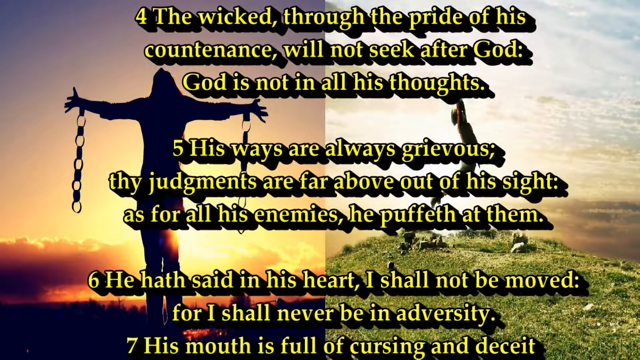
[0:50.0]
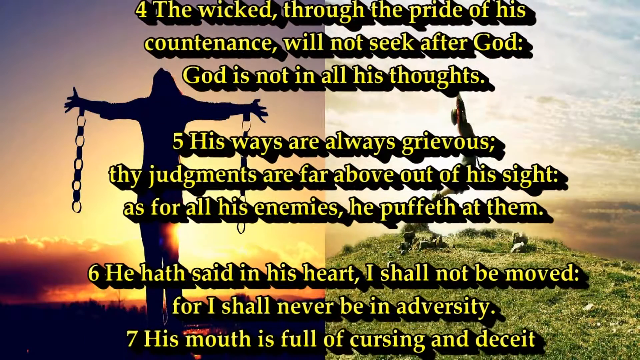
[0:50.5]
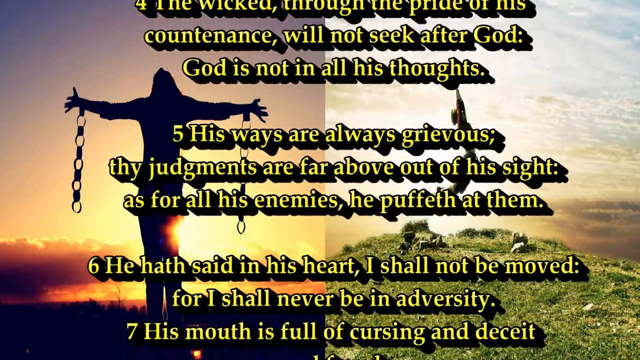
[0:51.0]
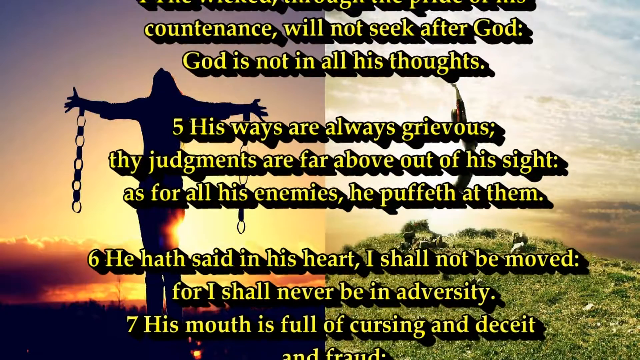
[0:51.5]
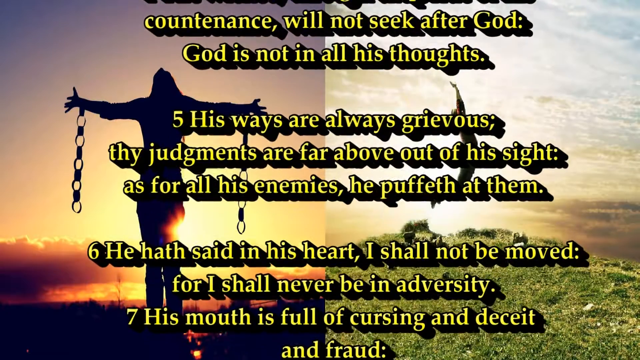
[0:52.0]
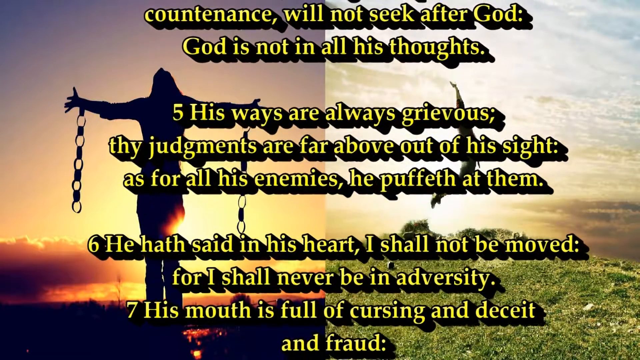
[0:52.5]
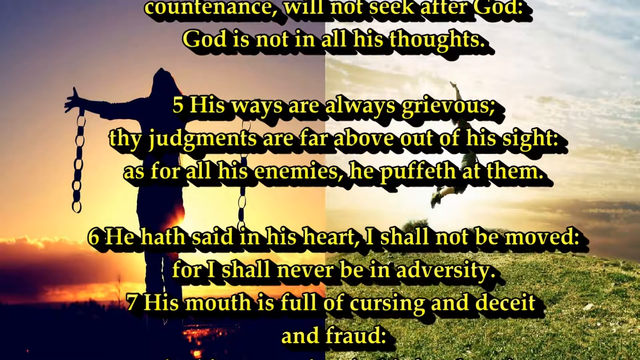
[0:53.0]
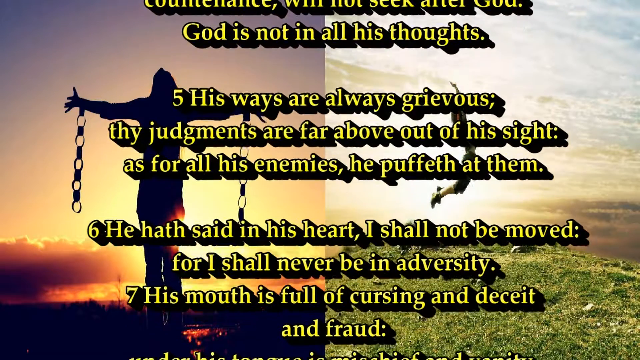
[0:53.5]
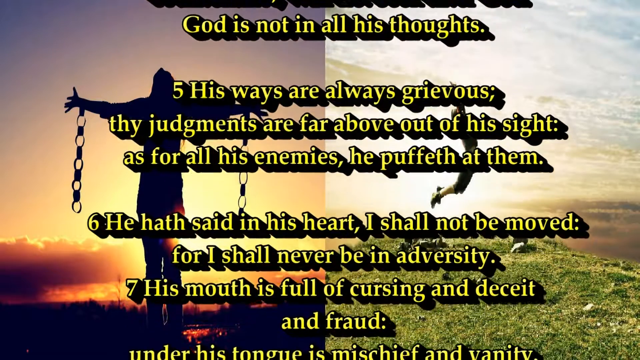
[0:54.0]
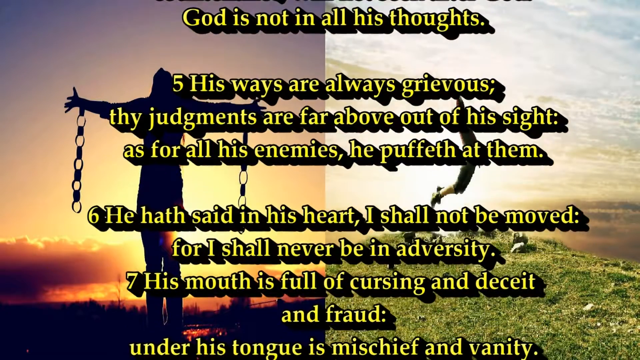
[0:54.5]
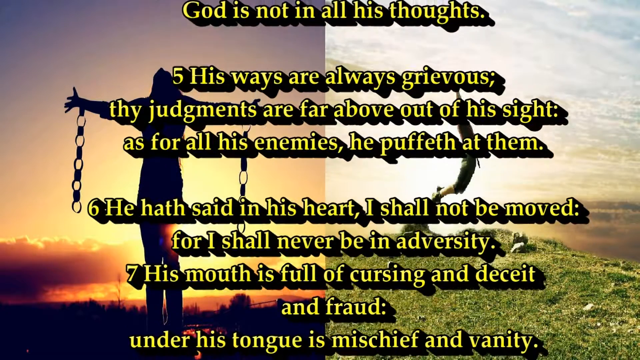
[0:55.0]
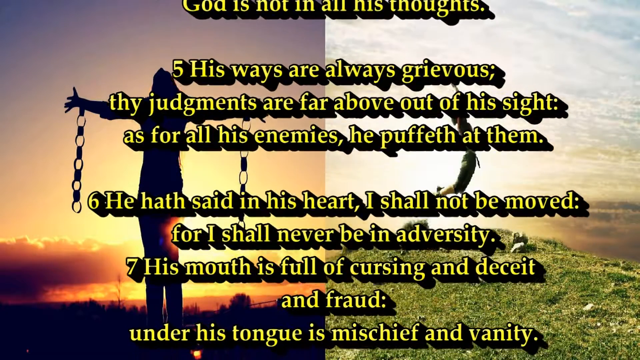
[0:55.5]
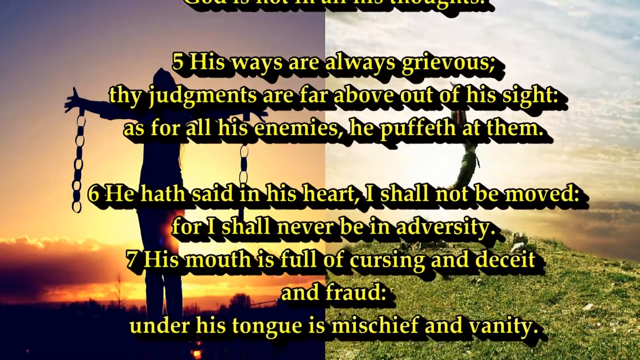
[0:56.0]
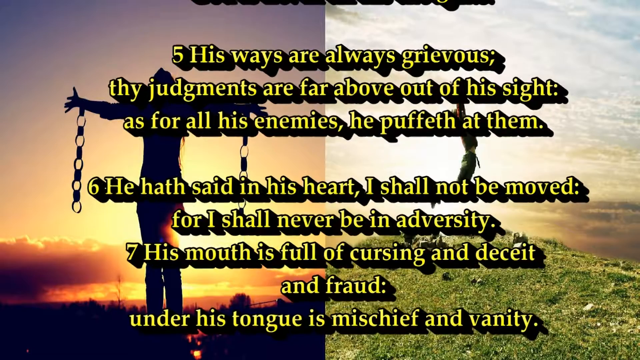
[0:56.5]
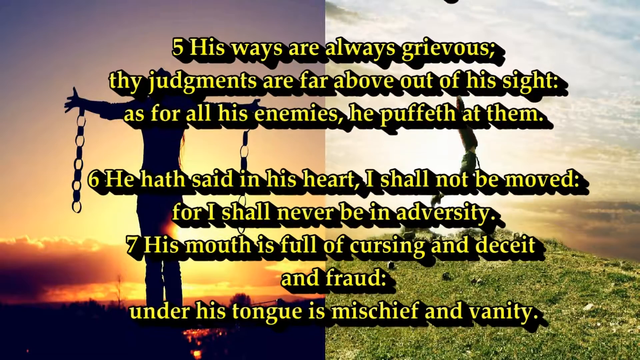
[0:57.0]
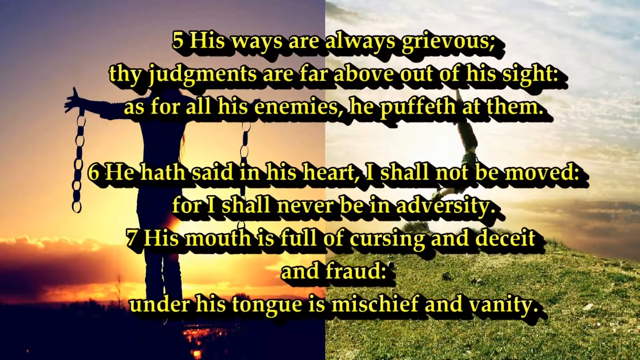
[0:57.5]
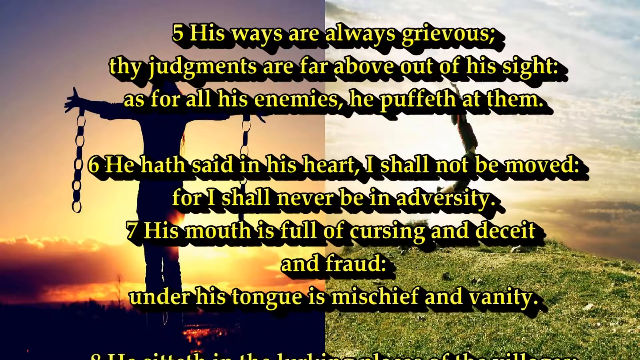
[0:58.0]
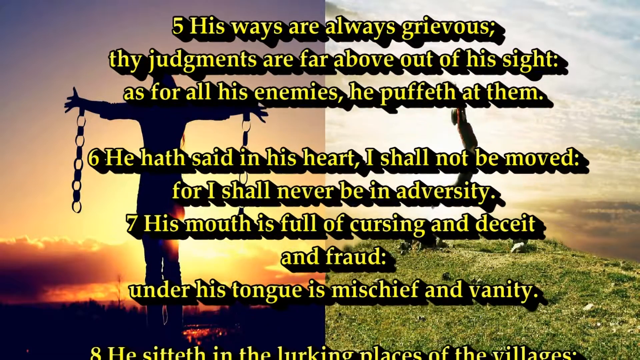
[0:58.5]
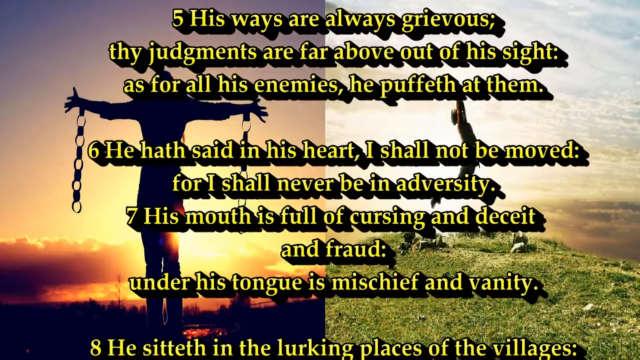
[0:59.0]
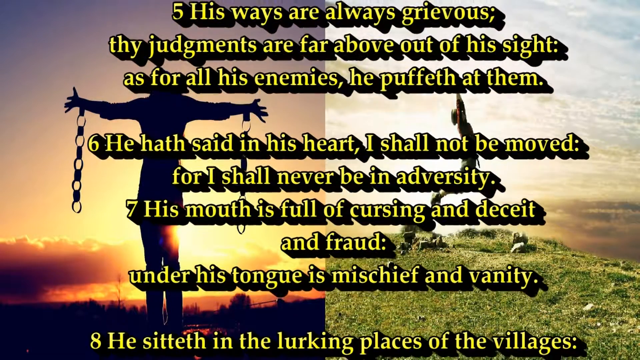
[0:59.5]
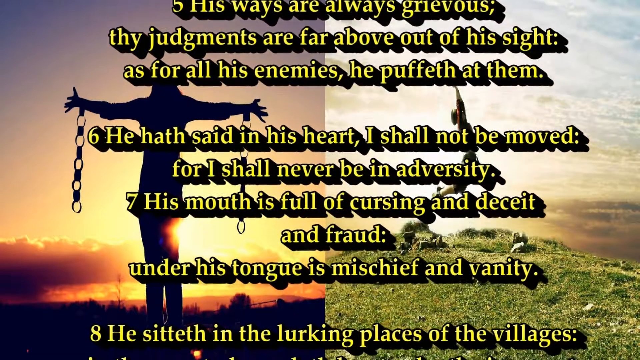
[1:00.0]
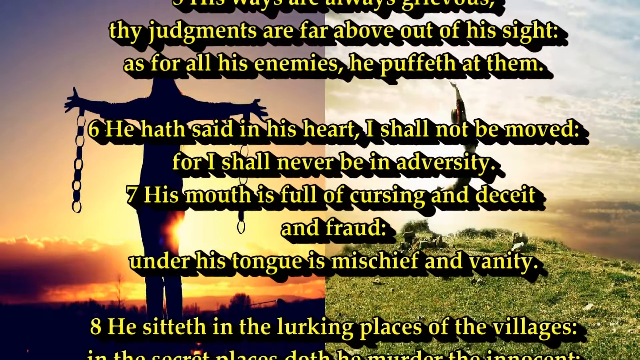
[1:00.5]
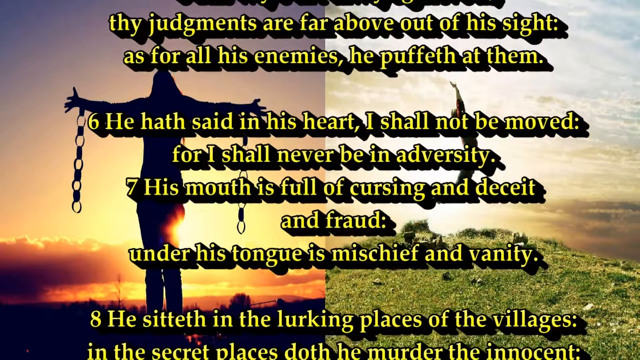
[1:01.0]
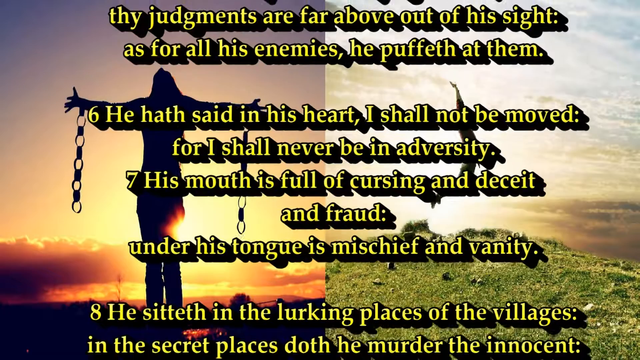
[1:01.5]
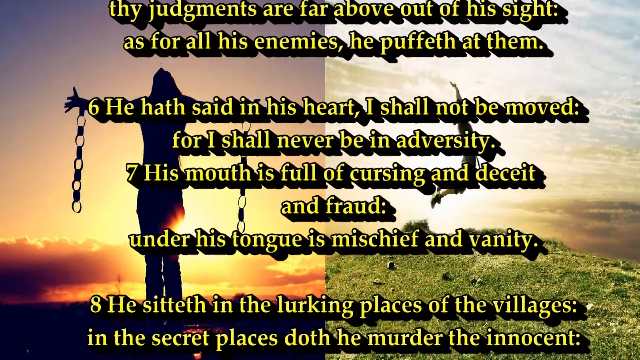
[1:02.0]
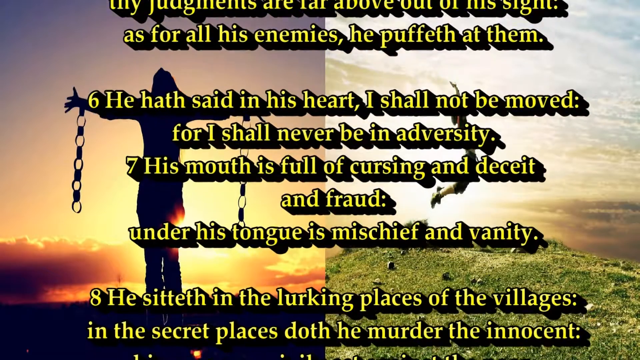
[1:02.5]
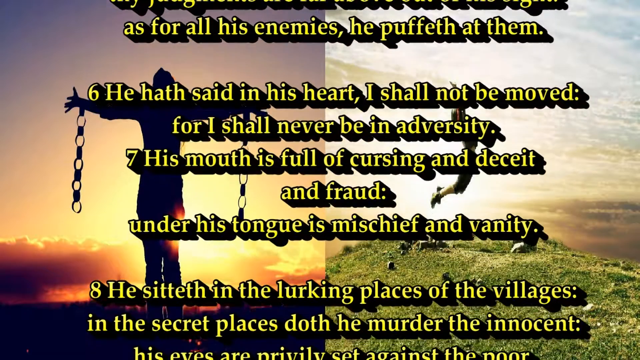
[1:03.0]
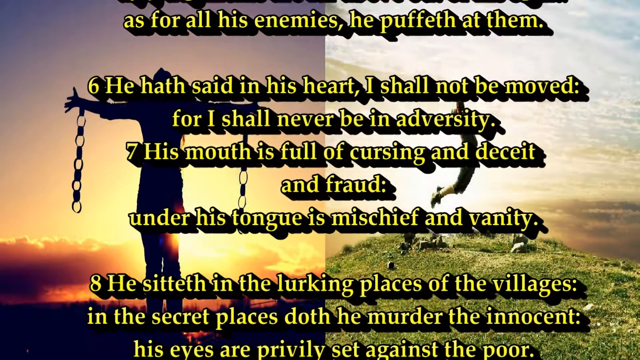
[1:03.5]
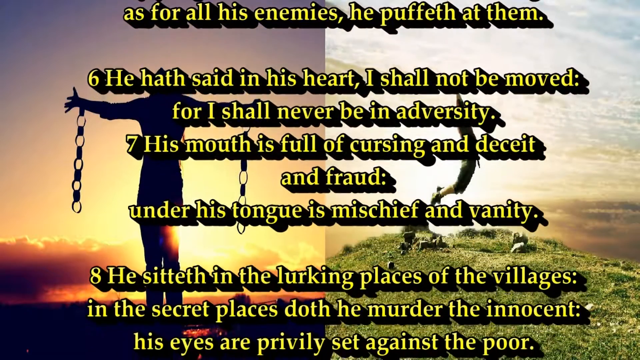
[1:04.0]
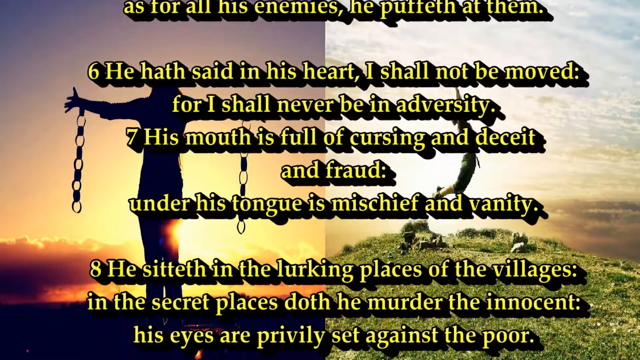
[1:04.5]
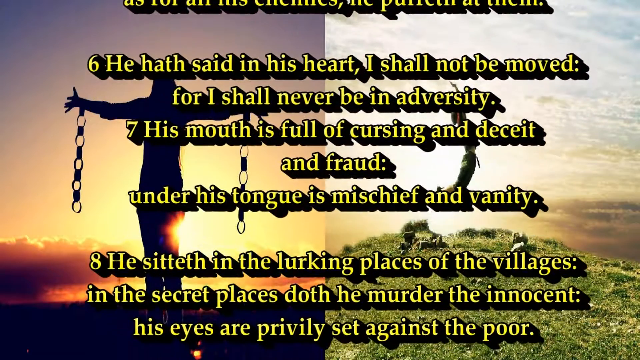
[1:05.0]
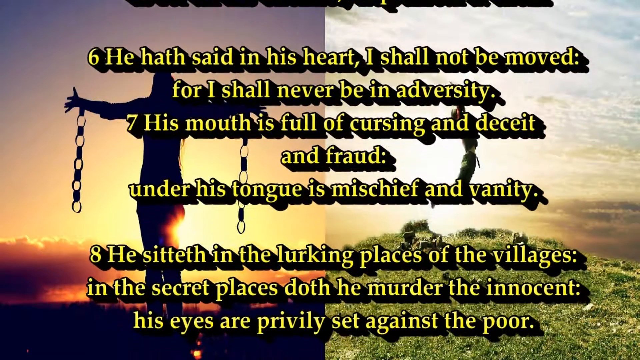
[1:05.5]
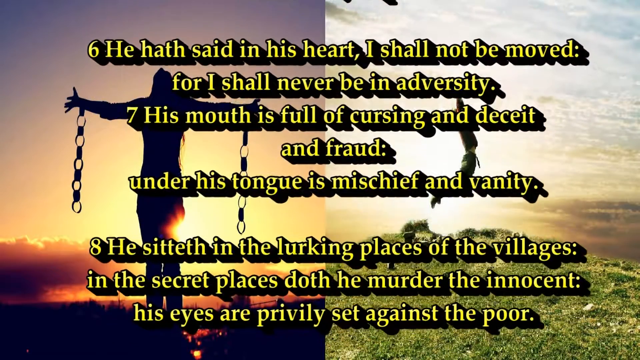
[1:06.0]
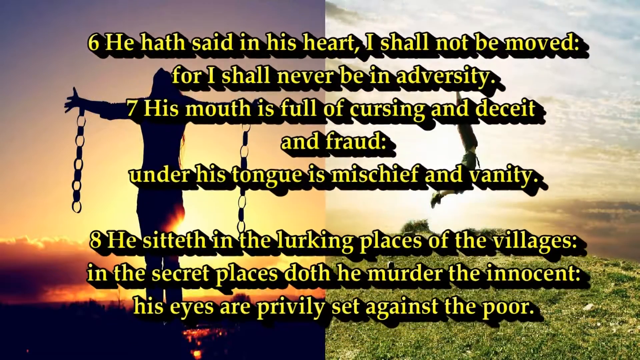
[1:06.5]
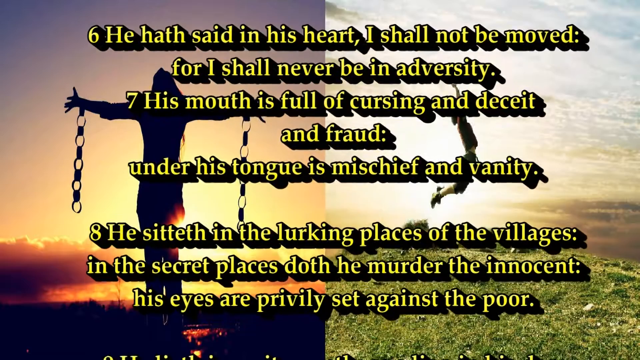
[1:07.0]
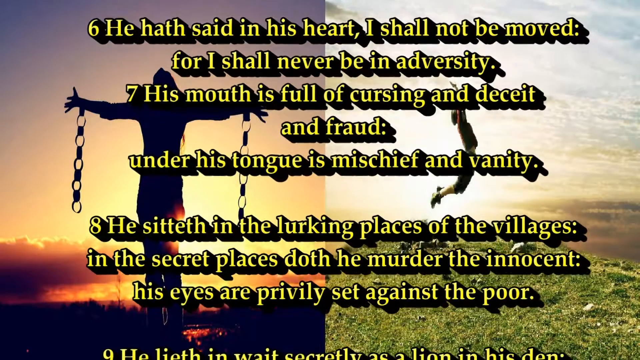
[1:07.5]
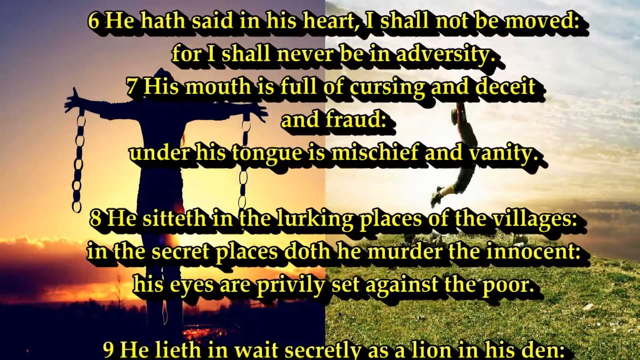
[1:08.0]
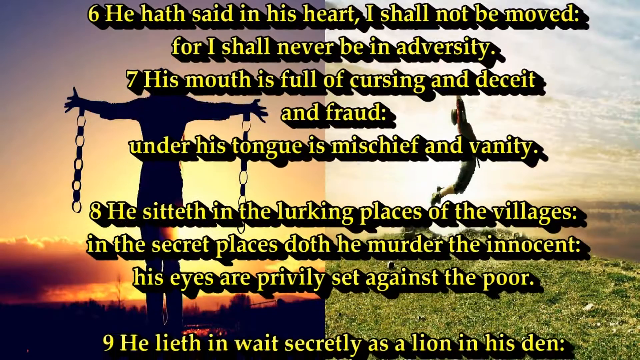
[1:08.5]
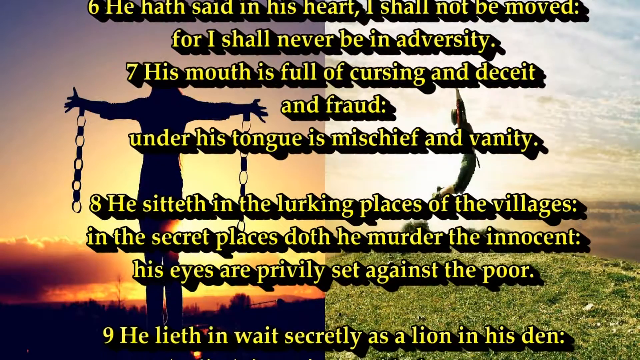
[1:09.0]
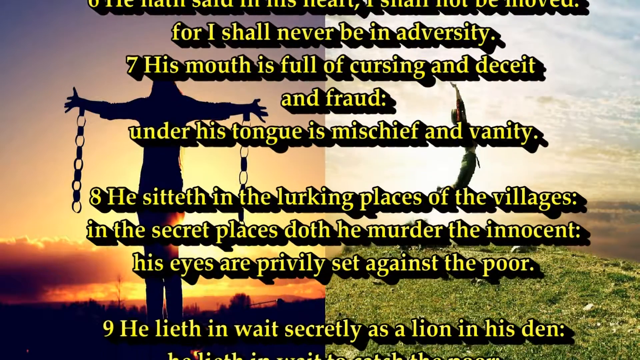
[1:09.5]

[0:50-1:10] The text is Psalm 10, with two pictures in the background of the verses. On the right, a person jumps with his arms straight up; behind him is a shiny cloud part, and where he stands seems to be a hill. On the other side of the video is a picture of a person who seems to be a man, standing with his arms opened and both his left and right hands chained. He seems to have long hair; the picture is in black, so it does not indicate whether he is wearing black clothes. The verses shown start at verse 4 and go down to verse 9, six verses in all.